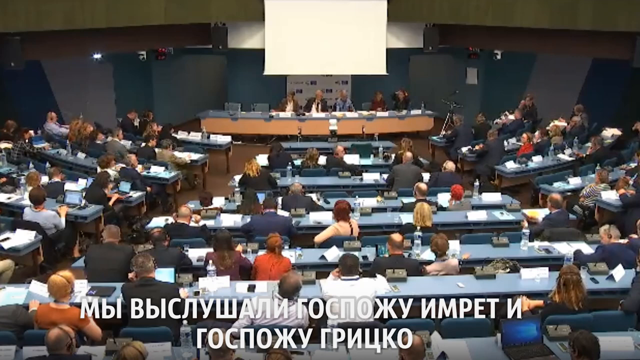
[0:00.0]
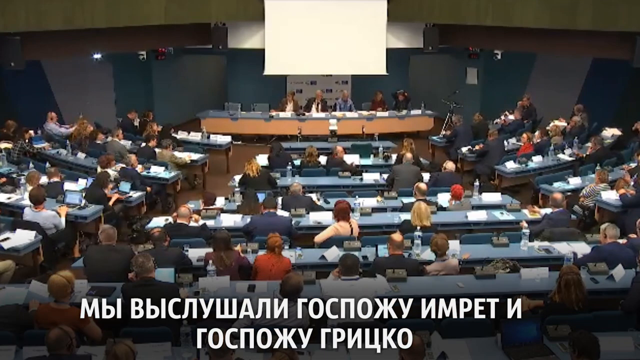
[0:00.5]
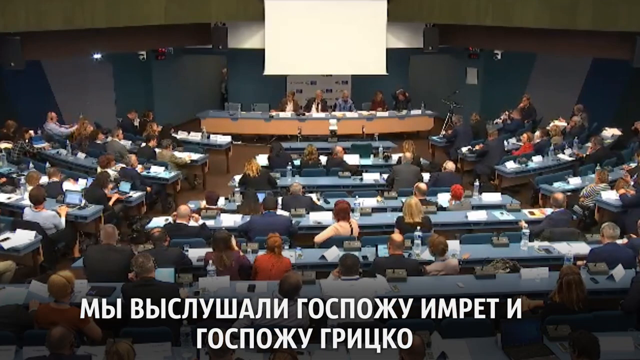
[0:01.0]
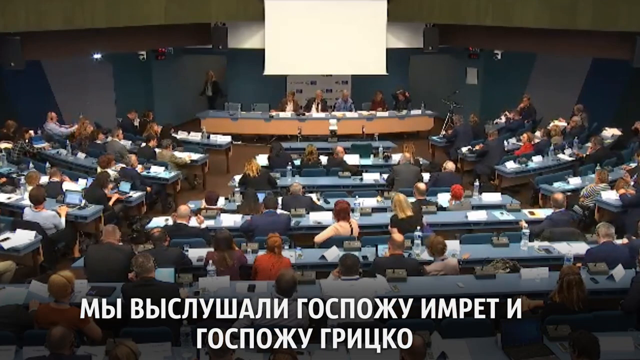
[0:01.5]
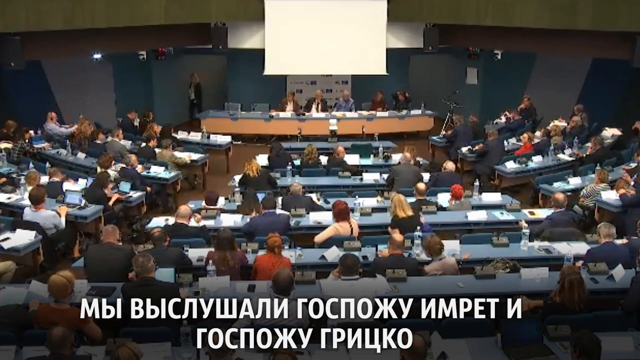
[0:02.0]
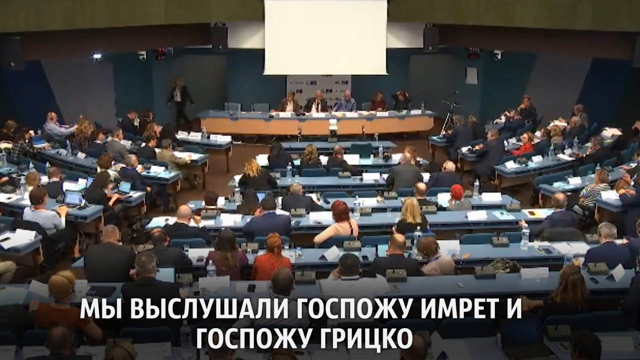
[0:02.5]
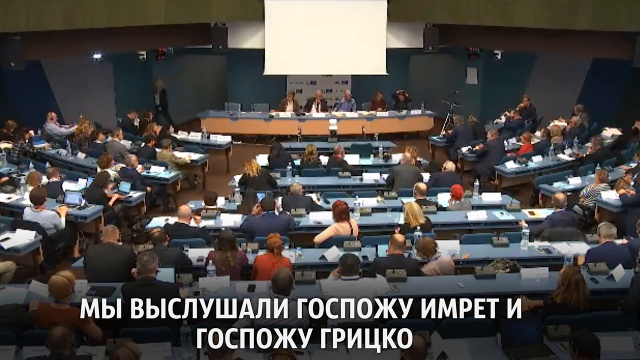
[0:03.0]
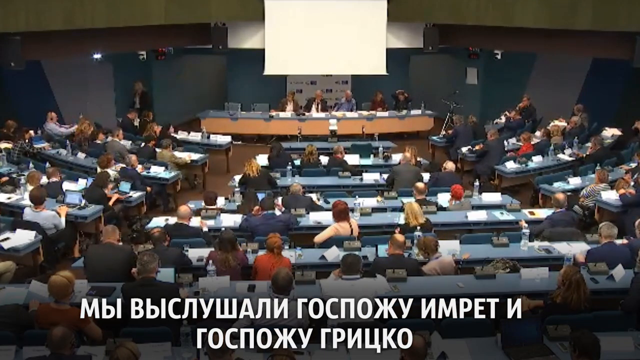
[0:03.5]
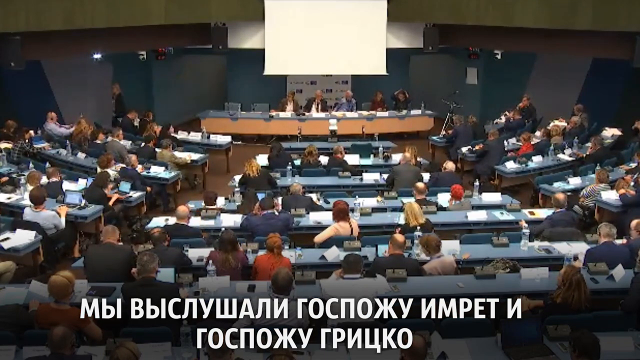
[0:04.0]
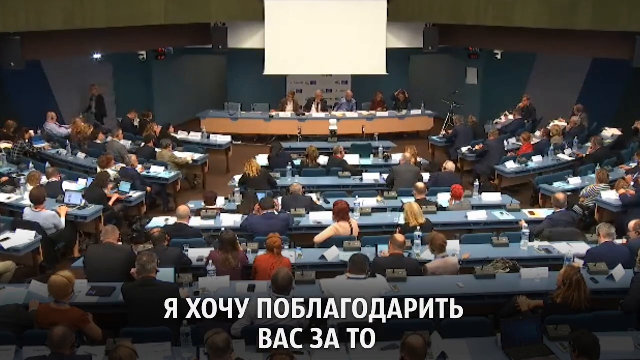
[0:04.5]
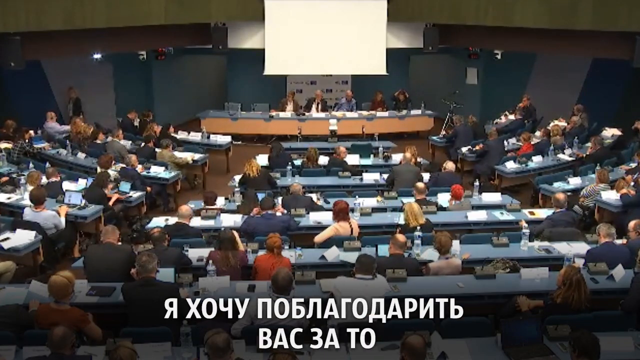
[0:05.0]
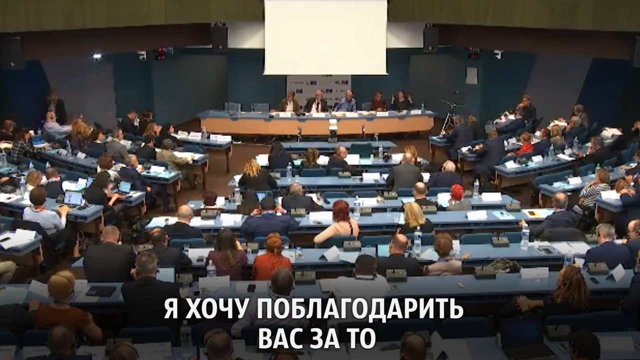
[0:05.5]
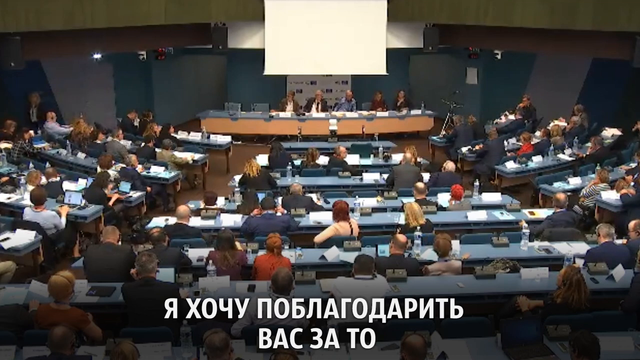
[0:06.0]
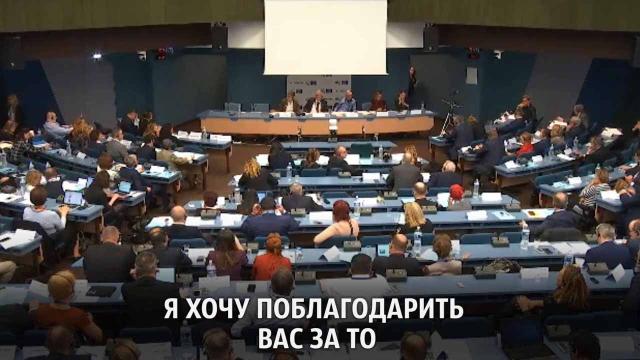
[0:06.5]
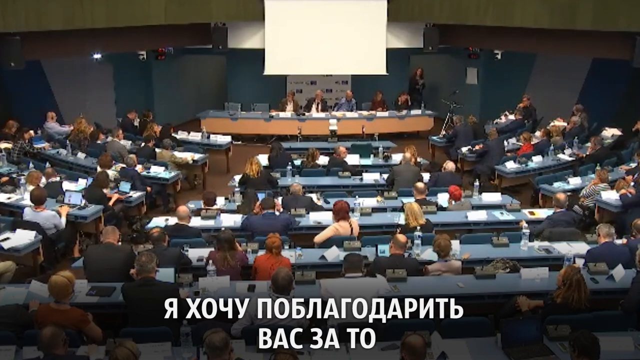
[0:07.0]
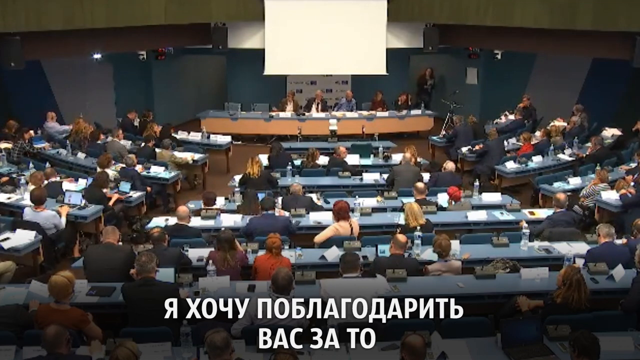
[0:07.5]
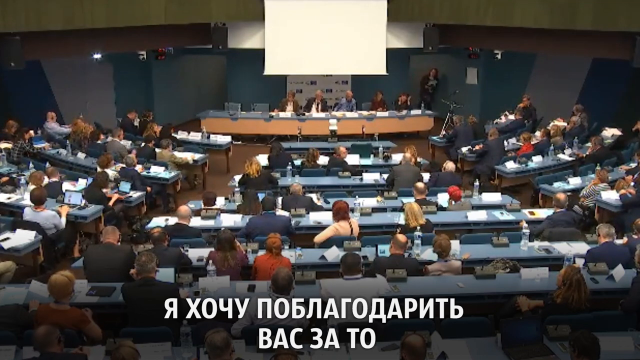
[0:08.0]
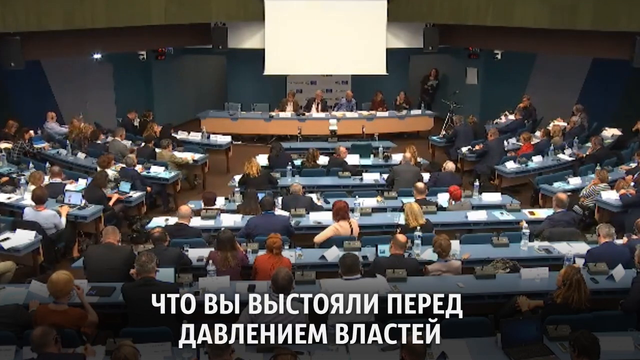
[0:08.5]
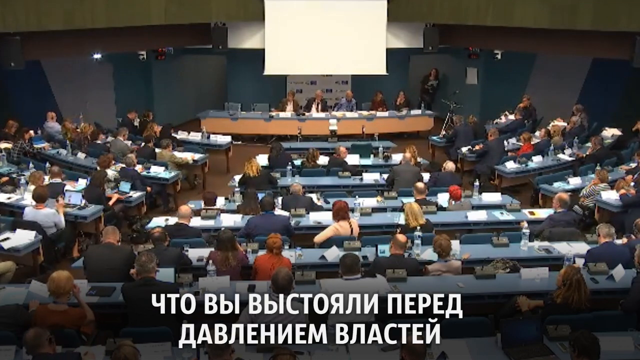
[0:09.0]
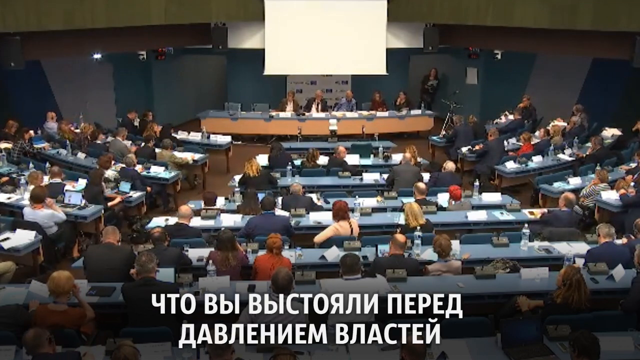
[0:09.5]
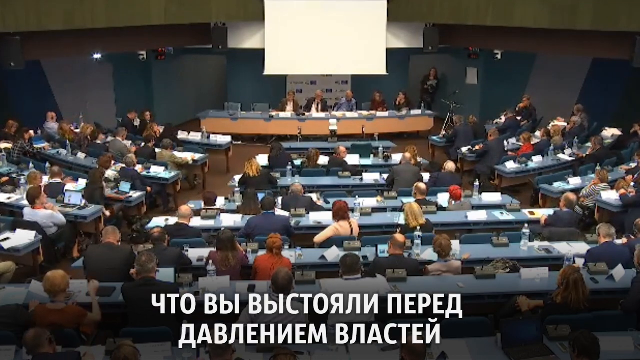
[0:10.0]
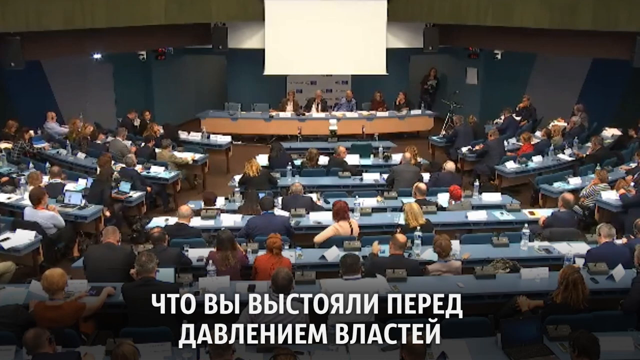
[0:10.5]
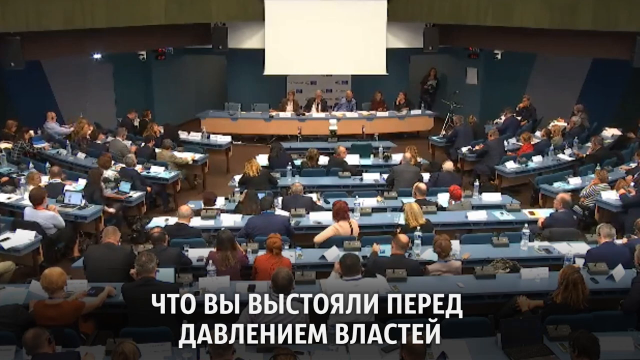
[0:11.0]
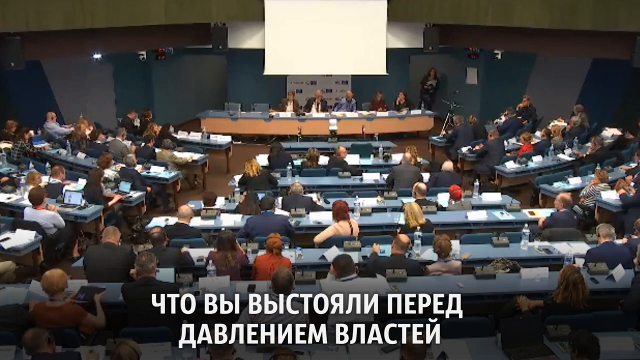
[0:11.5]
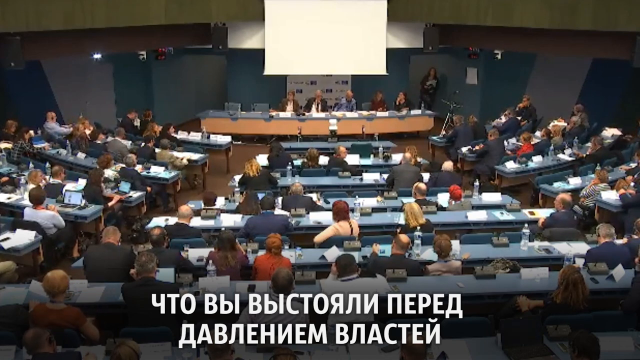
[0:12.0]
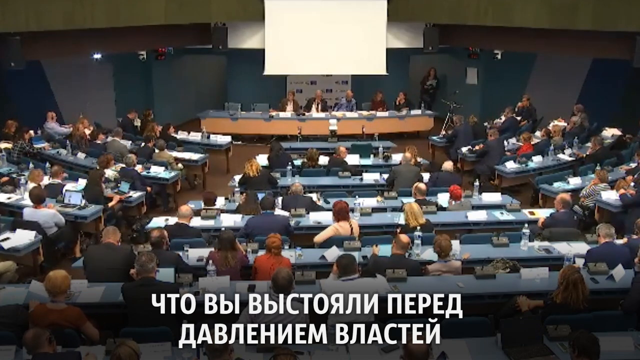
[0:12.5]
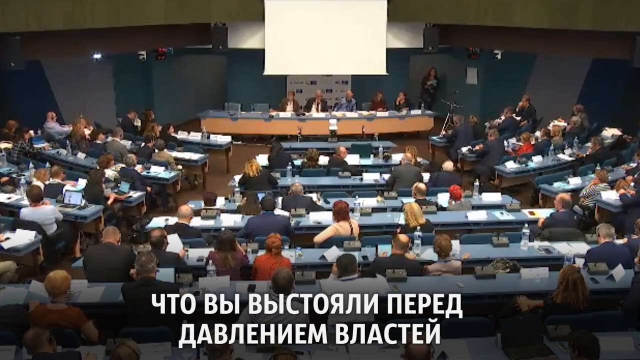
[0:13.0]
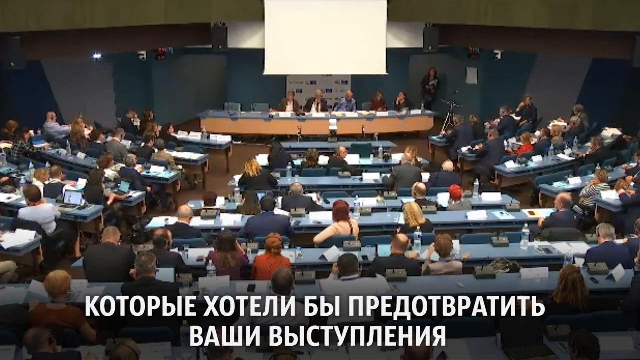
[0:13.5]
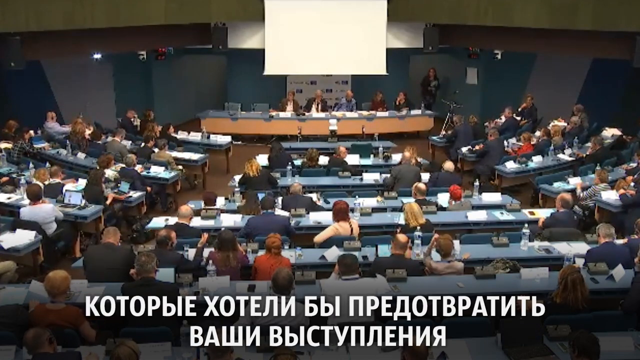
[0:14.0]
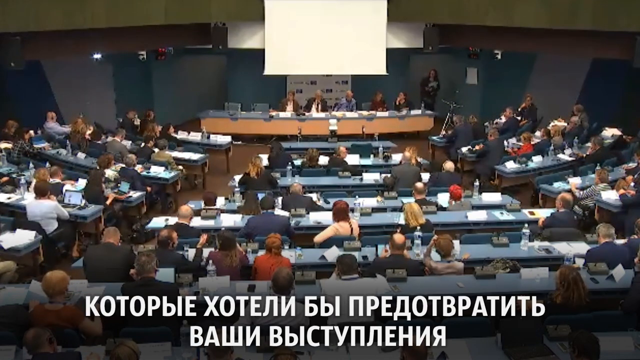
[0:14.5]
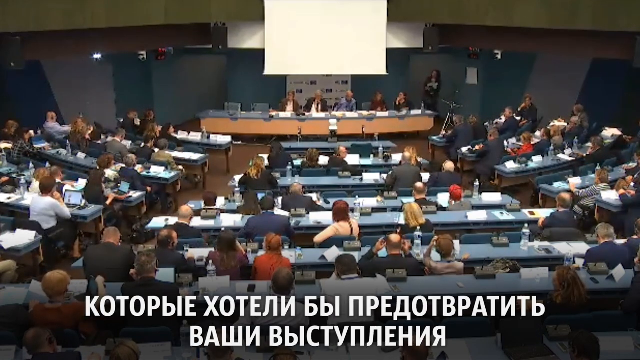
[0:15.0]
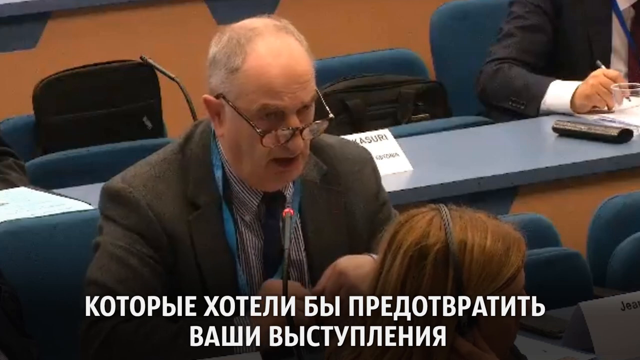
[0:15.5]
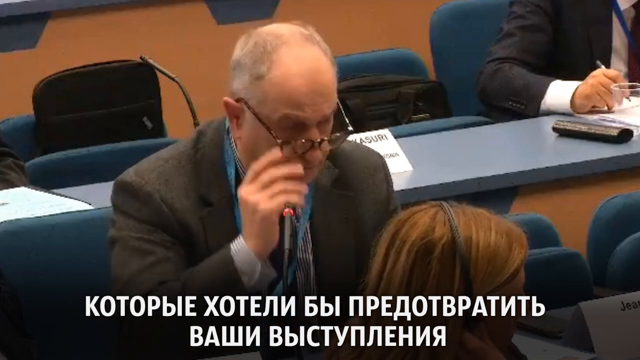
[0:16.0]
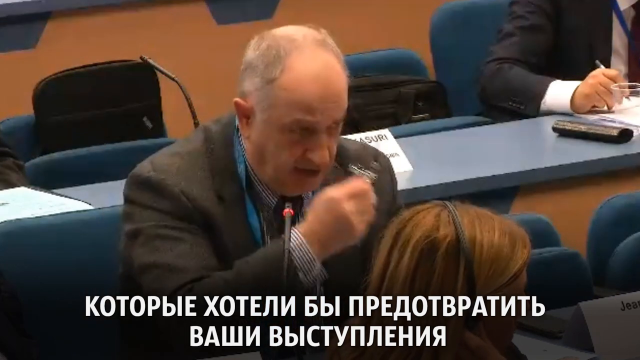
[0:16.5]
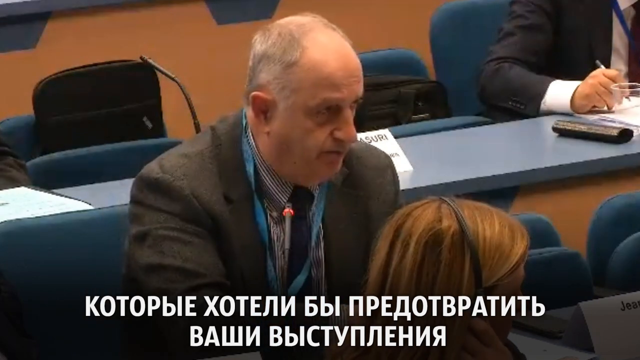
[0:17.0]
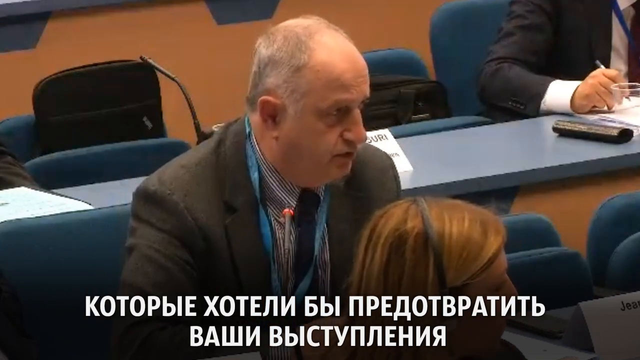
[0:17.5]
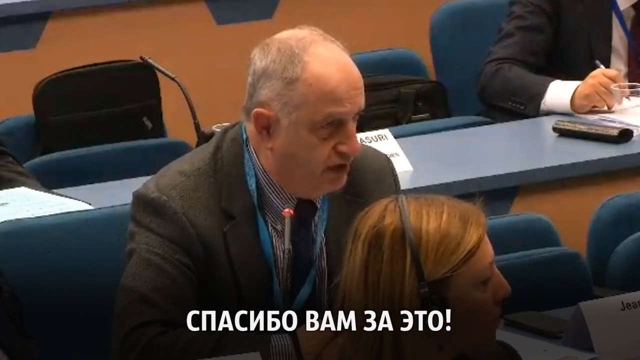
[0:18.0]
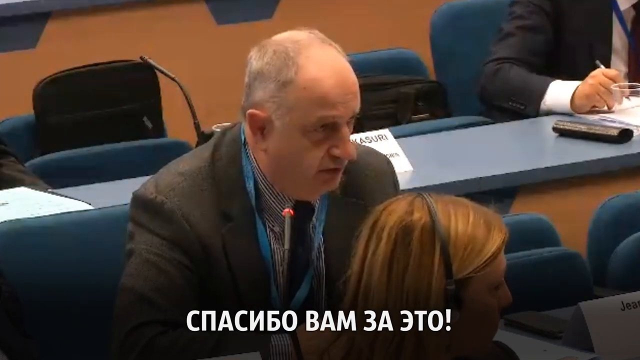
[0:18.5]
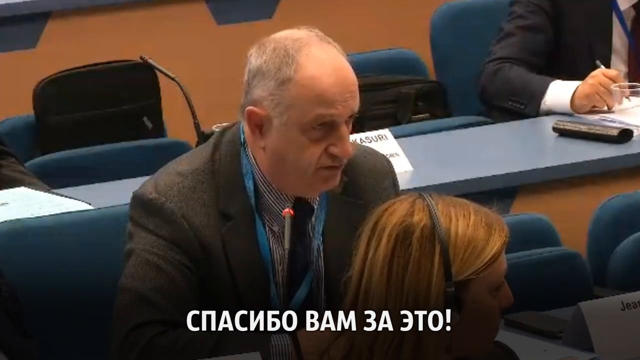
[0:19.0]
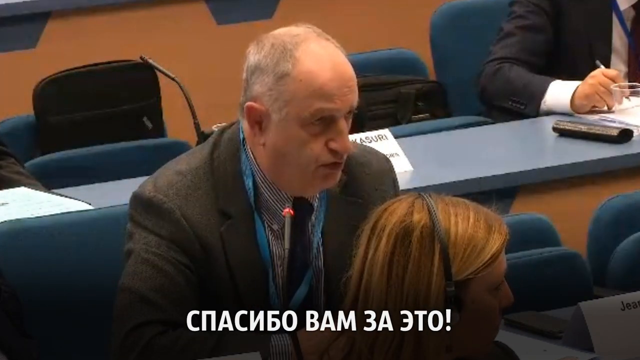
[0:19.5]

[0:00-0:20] What looks like some sort of meeting takes place among a large number of officials. They are all seated in very similar chairs at similar desks, arranged in three sections: one on the far left, one in the middle, and one on the right. All the desks share the same shape, pattern and color, a sort of ice blue, and they are rectangular. The desks start out very long and get smaller as they approach the people at the top middle who are apparently hosting the meeting. Several people are seated at these desks, many of them with computers in front of them. Foreign, non-English text appears at the bottom of the screen. Toward the end, the view cuts to a close-up of one of the members, a man who looks somewhat older, maybe in his late 50s or early 60s. He wears a sort of pale brown vest and looks toward the people apparently hosting the meeting while talking, seemingly as the main speaker.